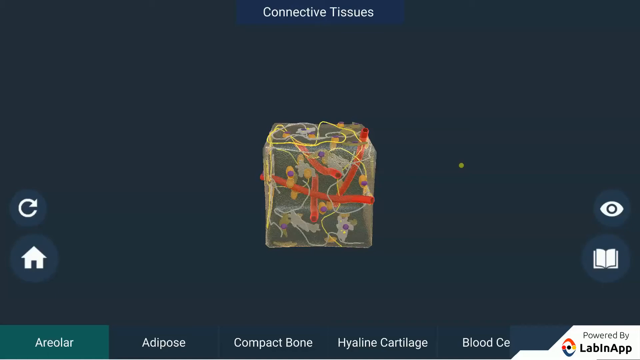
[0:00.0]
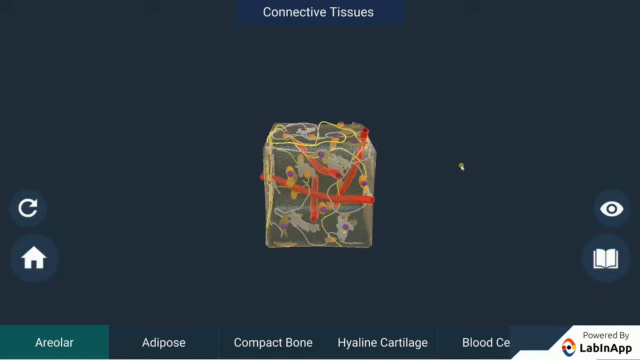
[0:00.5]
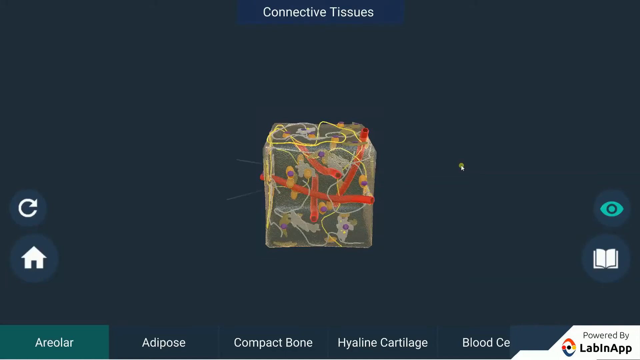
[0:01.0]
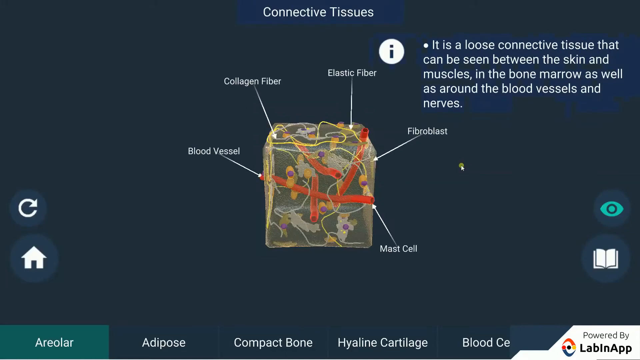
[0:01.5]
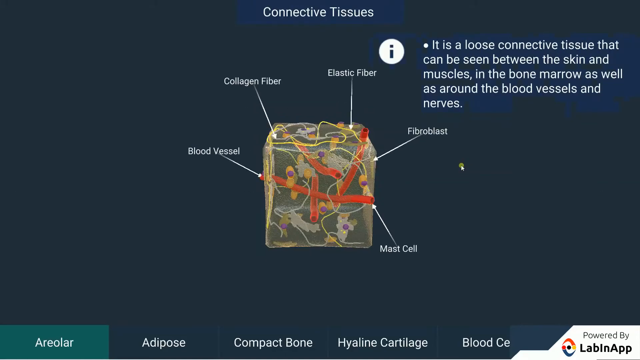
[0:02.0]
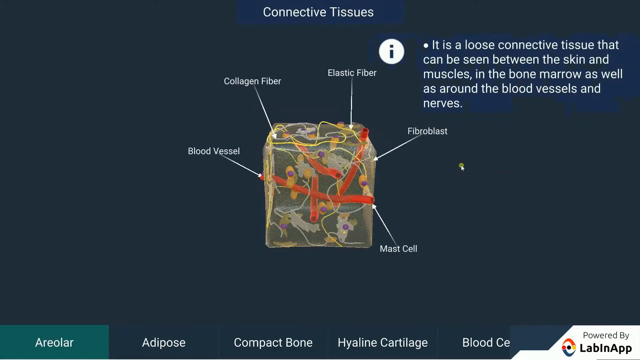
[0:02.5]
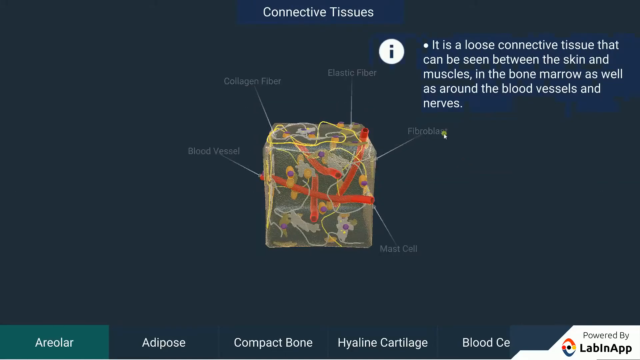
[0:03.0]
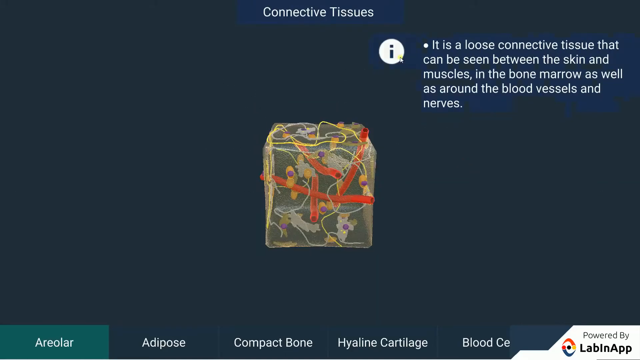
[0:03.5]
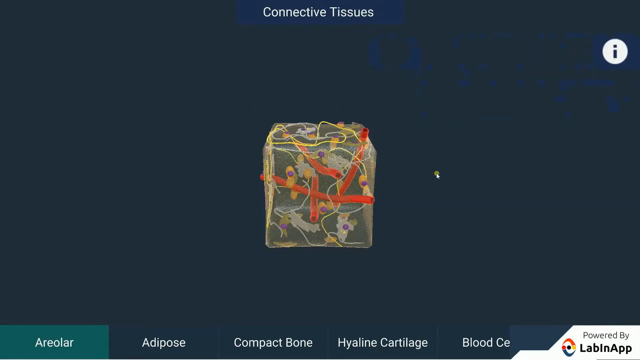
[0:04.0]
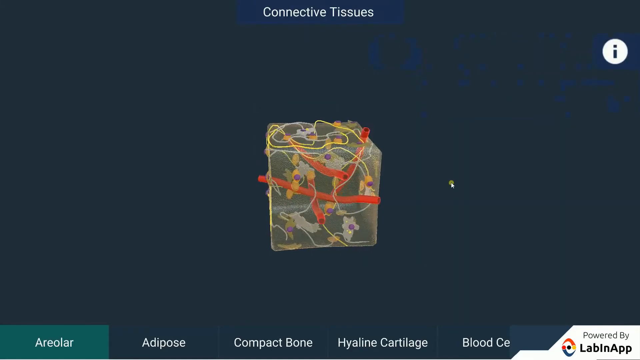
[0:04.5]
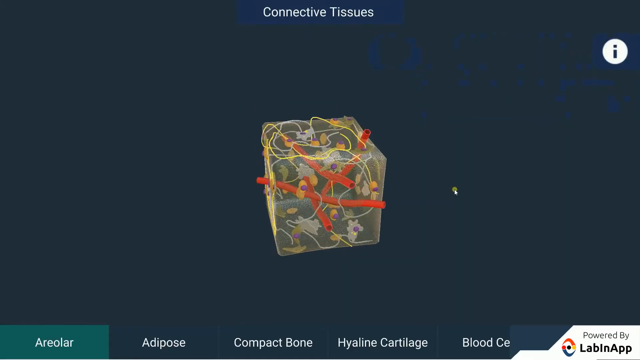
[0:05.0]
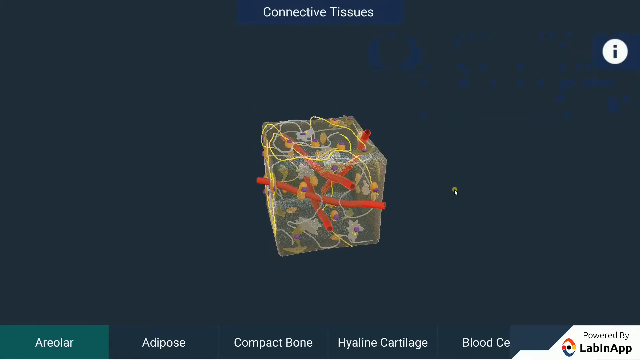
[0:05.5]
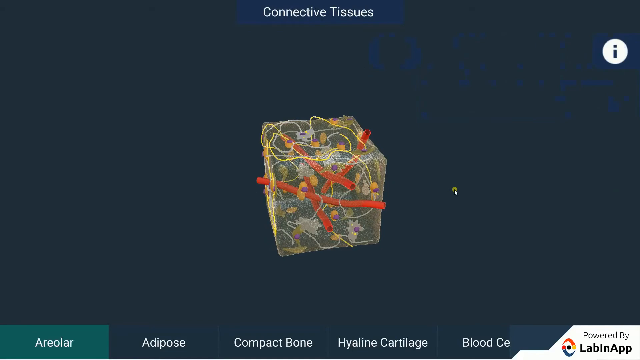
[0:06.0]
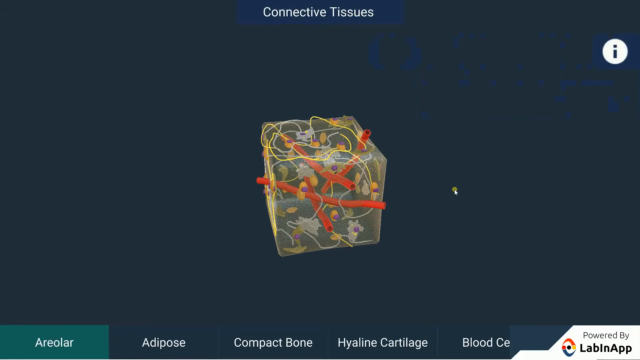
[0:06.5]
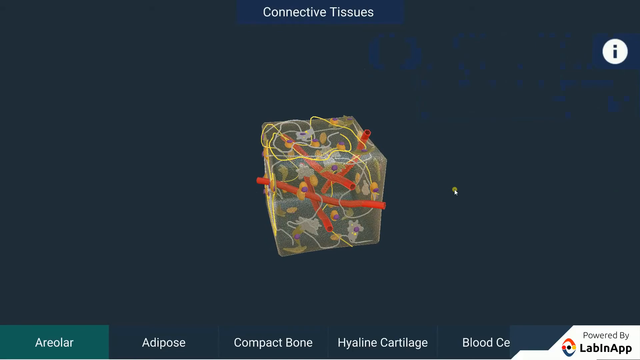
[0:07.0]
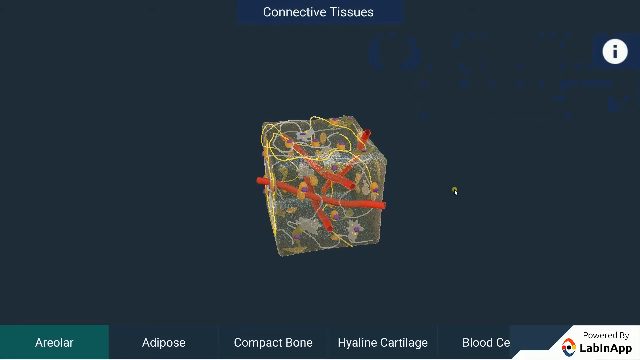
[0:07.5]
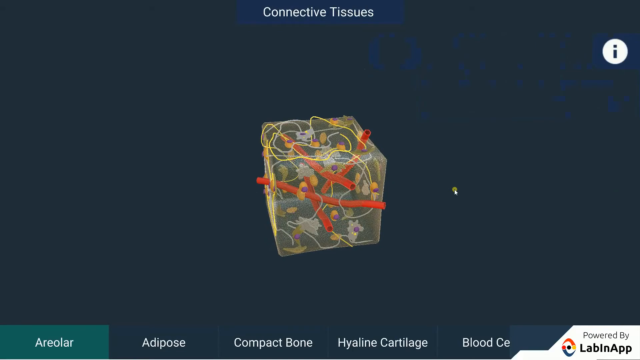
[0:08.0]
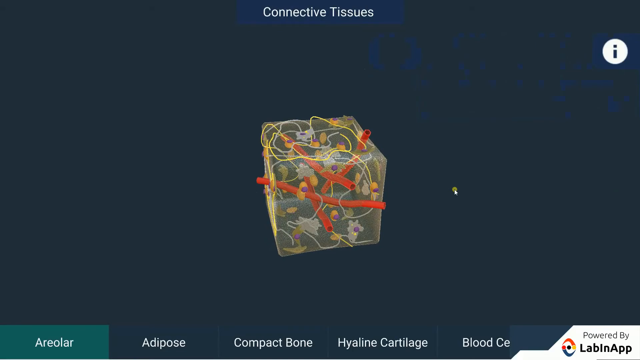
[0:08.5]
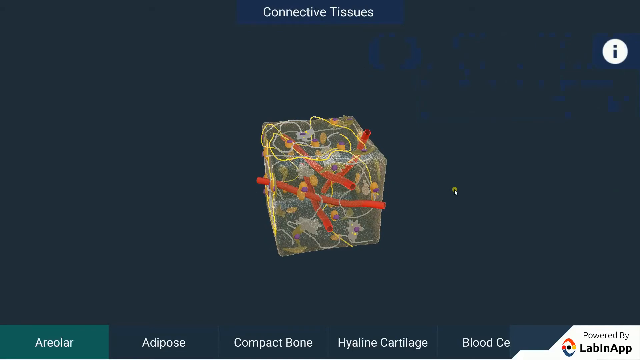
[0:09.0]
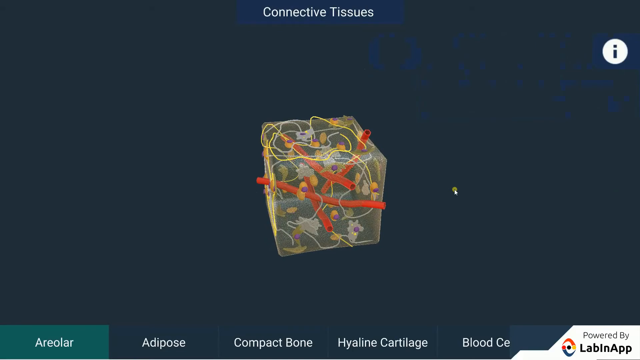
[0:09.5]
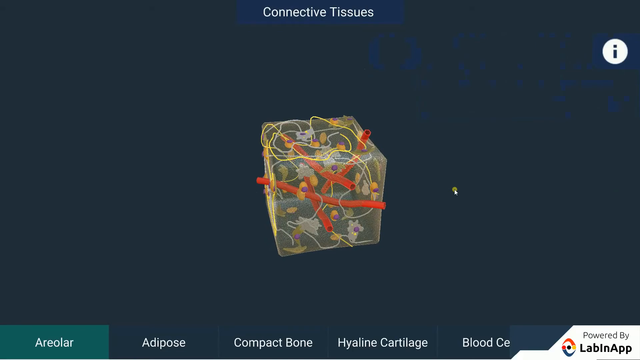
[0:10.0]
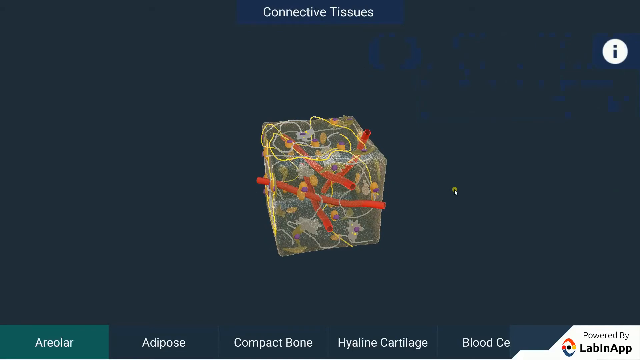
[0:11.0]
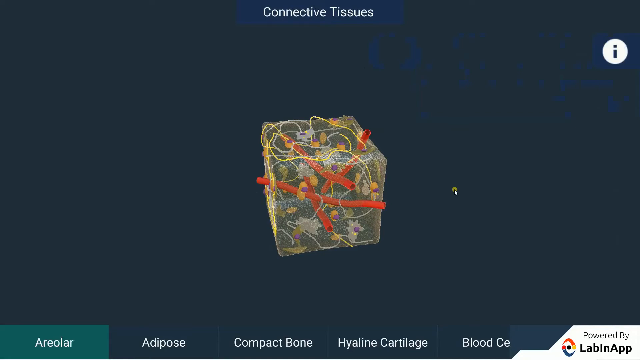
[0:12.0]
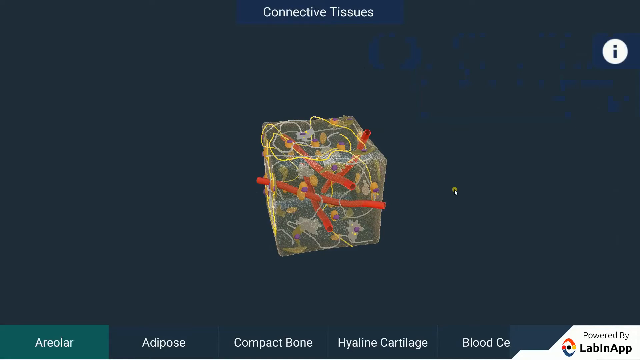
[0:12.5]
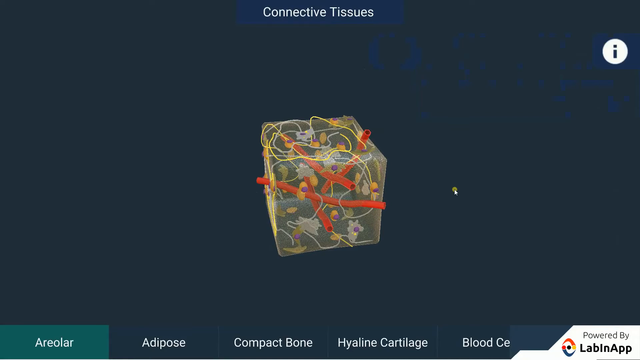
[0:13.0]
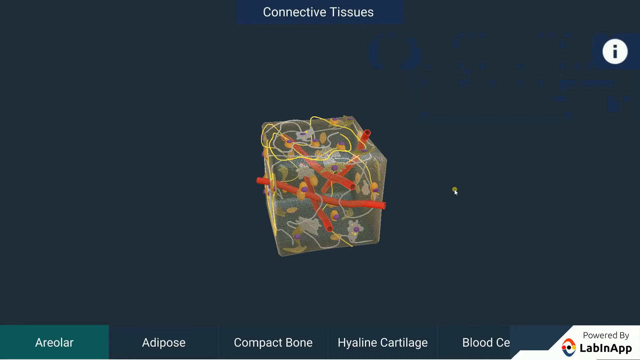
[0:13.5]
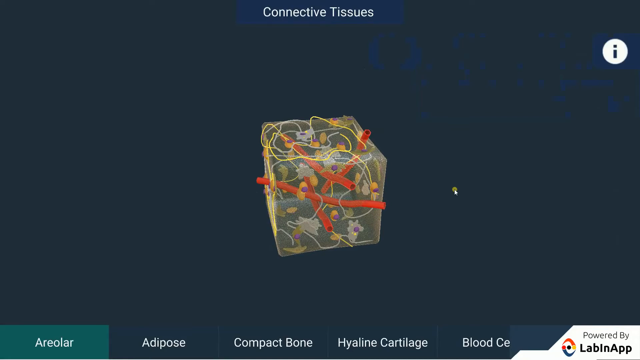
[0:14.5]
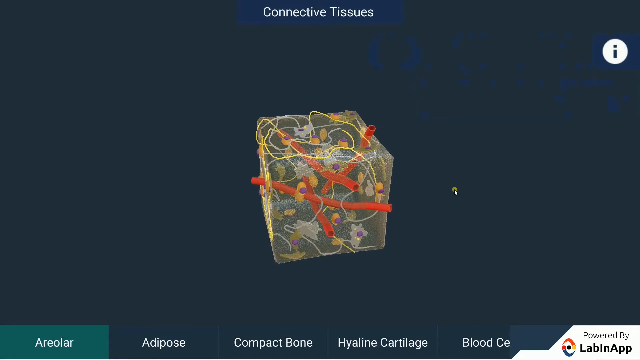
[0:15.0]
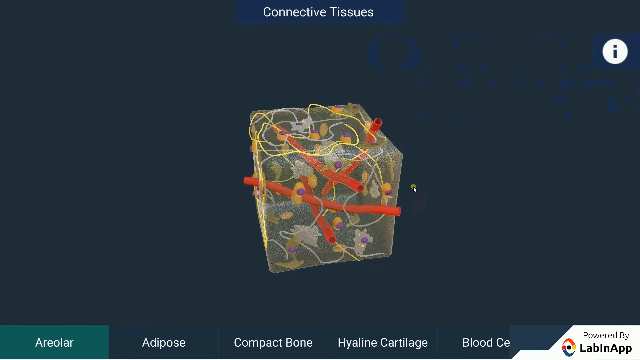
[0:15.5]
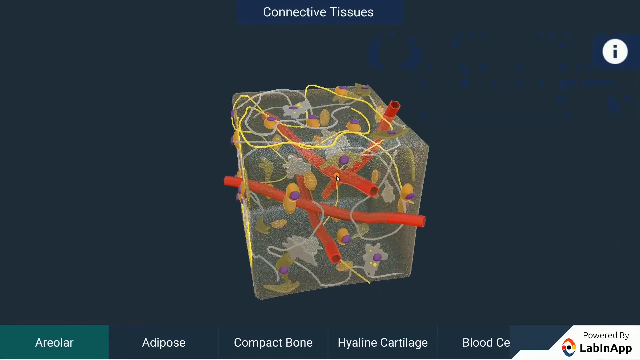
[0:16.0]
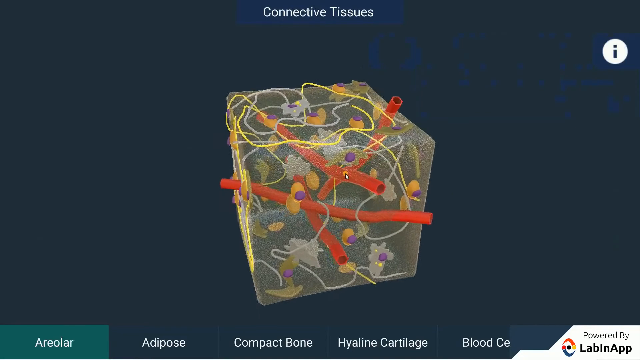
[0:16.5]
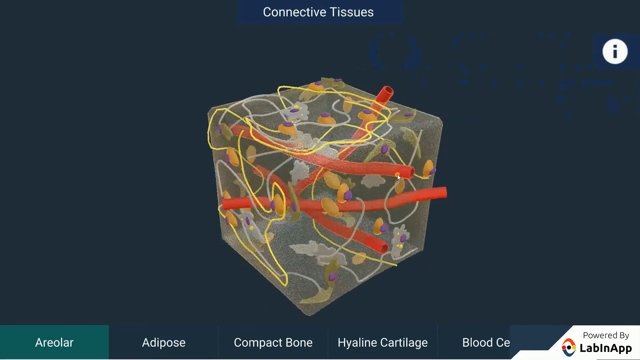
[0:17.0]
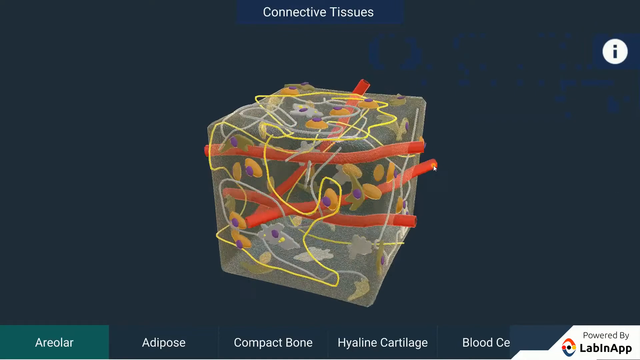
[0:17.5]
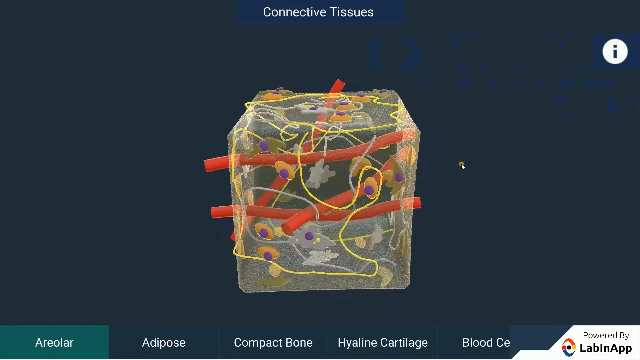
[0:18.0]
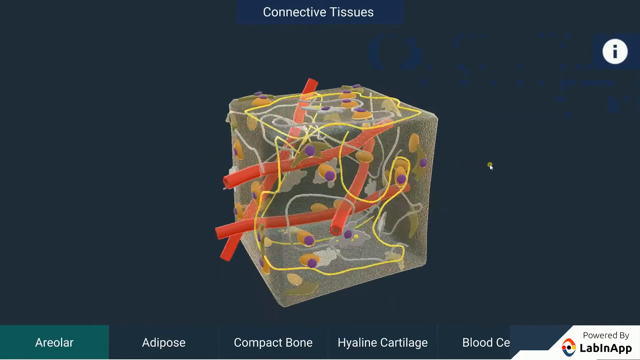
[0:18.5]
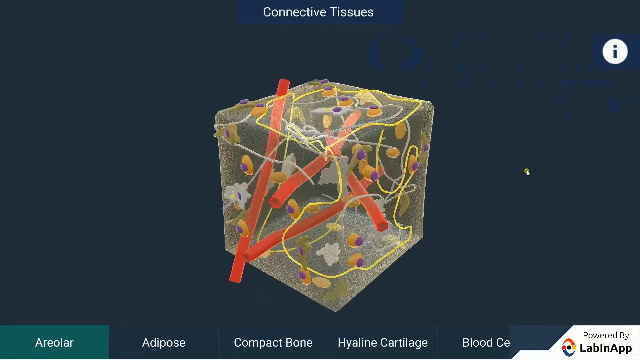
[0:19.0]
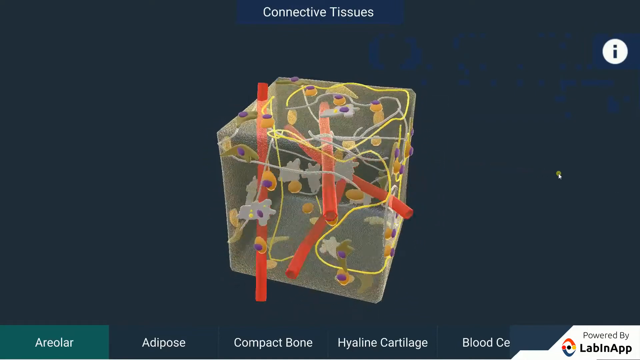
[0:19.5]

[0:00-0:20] Judging by a title that says "connective tissues," the video appears to be a presentation of a medical concept. In the center of the screen is a 3D-modeled cube, something related to the human body or biology. Several labels appear with arrows indicating positions in the cube: "Blood vessel," "collagen fiber," "elastic fiber," "fibroblast" and "mast cell." At the upper right, text overlaid in blue says "It is a loose connective tissue that can be seen between the skin and muscles, in the bone marrow as well as around the blood vessels and nerves." All of this text then disappears, leaving just the cube alone in the center; the on-screen cursor begins to rotate it a little to the side while the camera zooms into it.